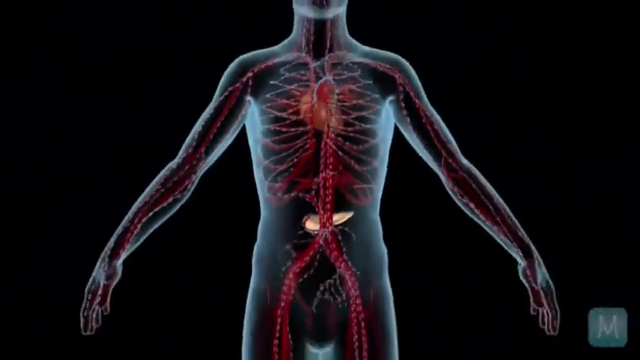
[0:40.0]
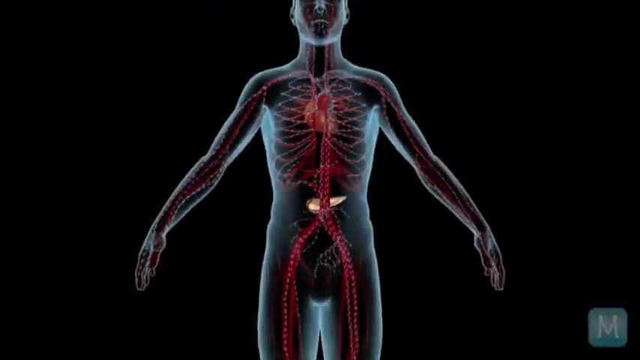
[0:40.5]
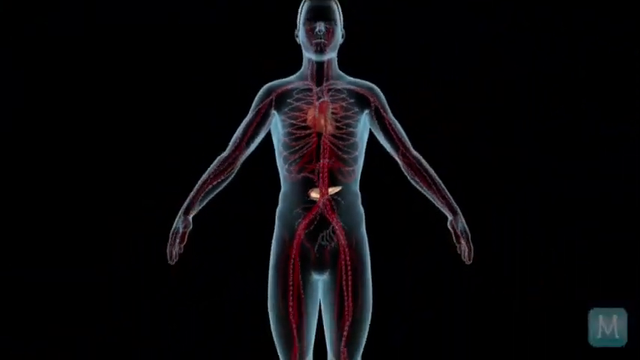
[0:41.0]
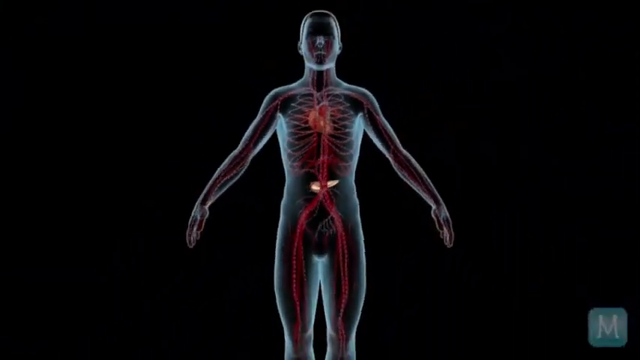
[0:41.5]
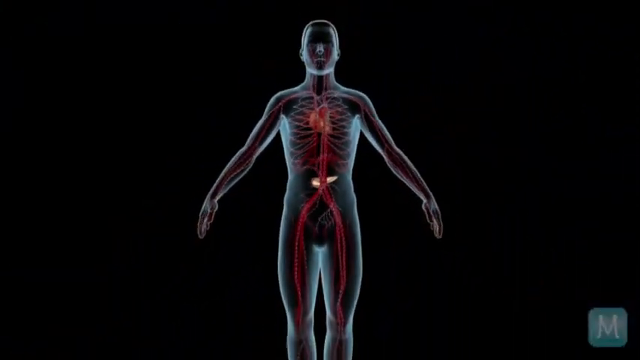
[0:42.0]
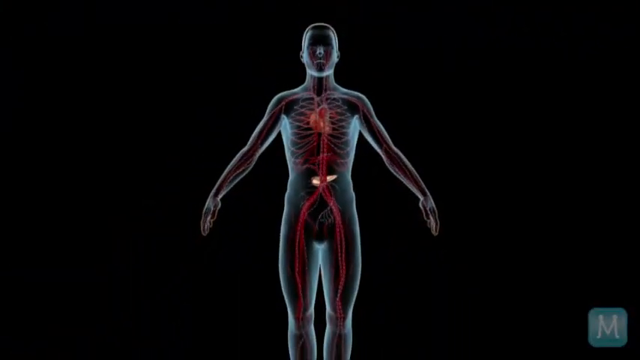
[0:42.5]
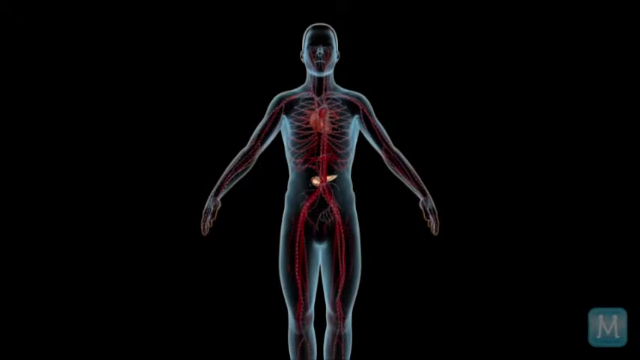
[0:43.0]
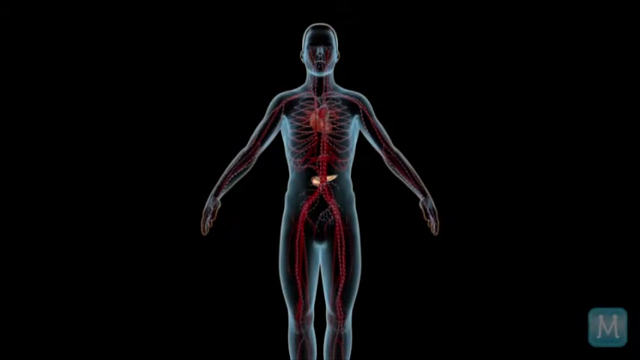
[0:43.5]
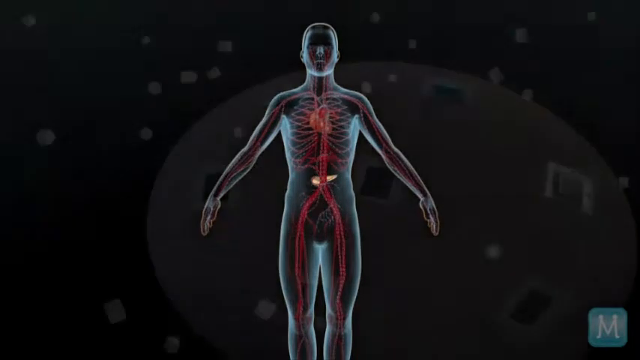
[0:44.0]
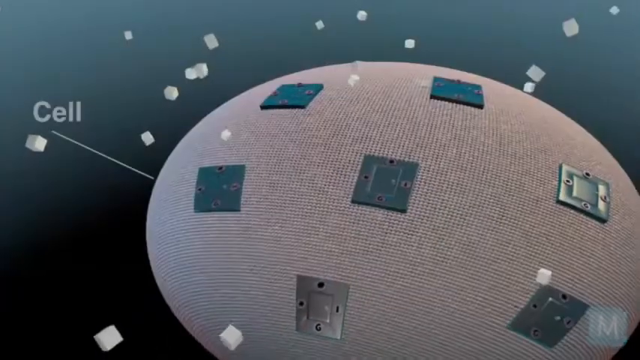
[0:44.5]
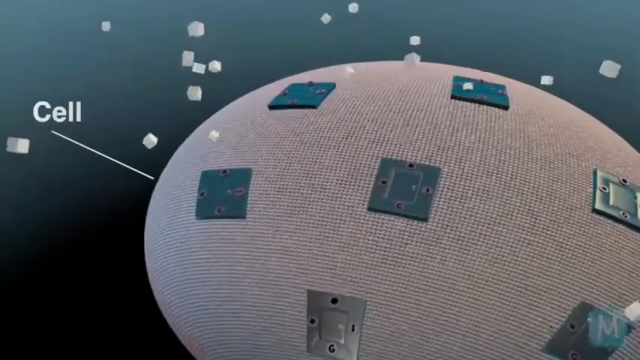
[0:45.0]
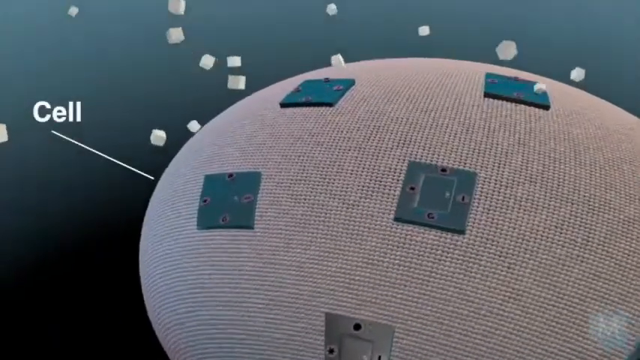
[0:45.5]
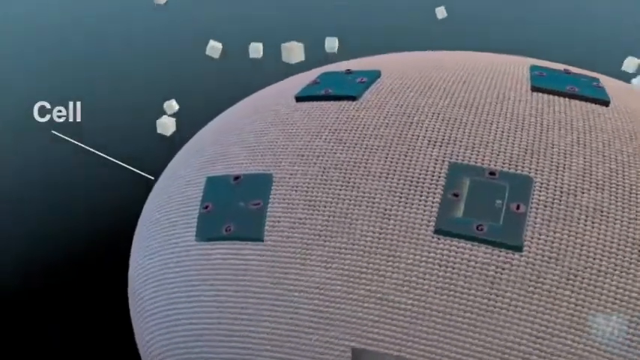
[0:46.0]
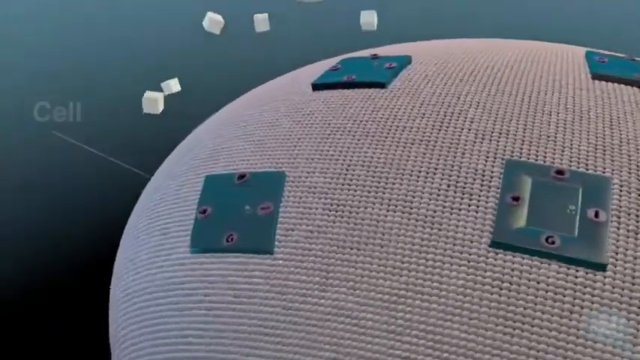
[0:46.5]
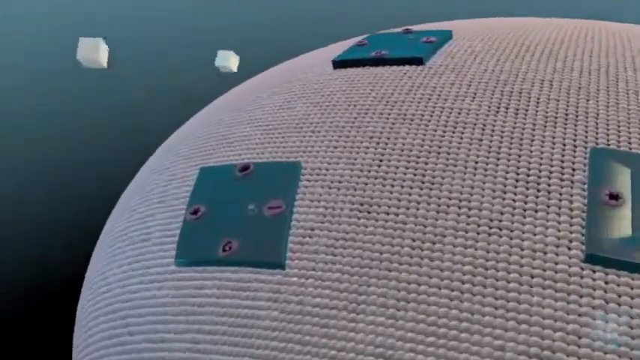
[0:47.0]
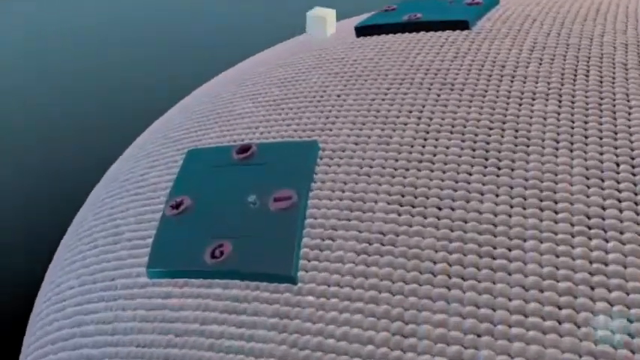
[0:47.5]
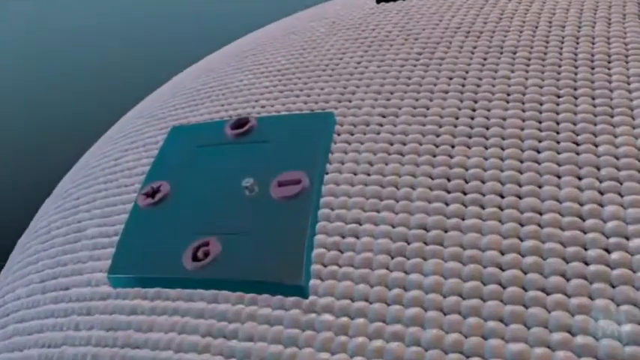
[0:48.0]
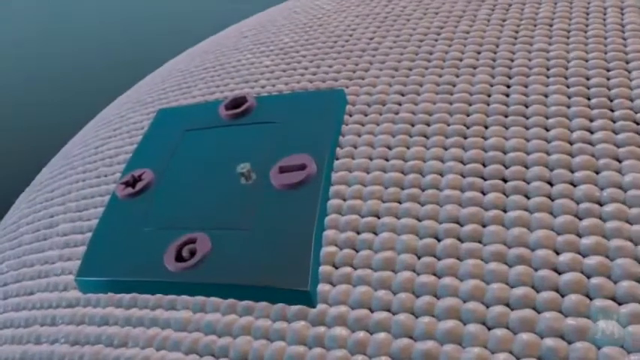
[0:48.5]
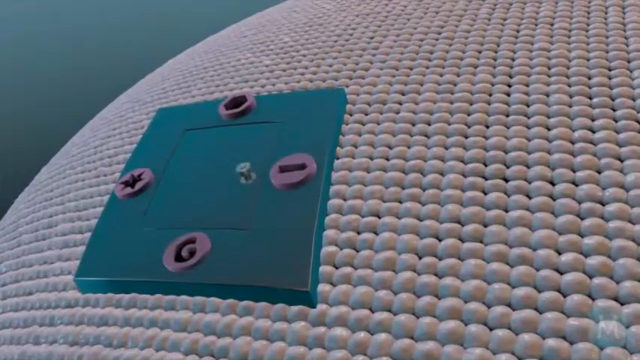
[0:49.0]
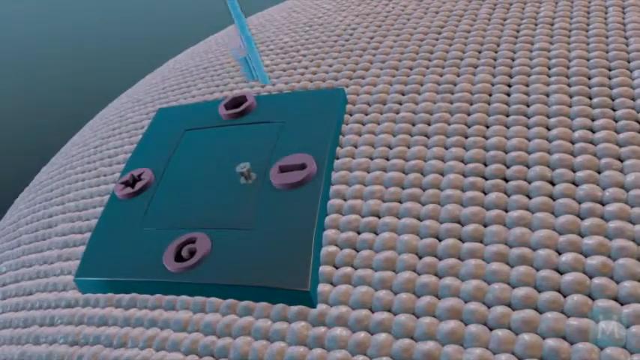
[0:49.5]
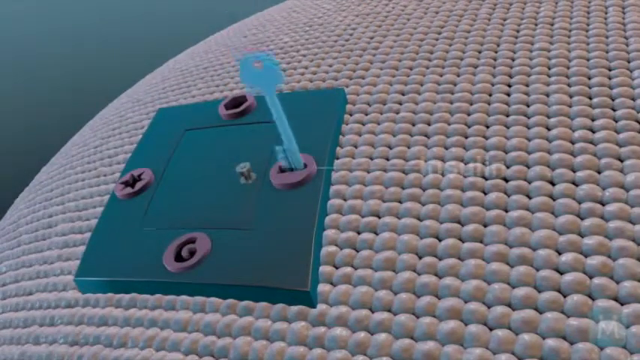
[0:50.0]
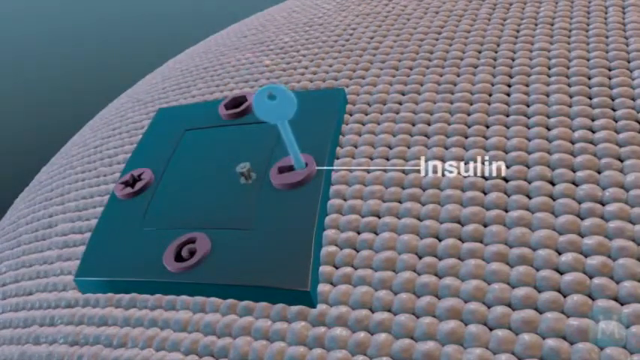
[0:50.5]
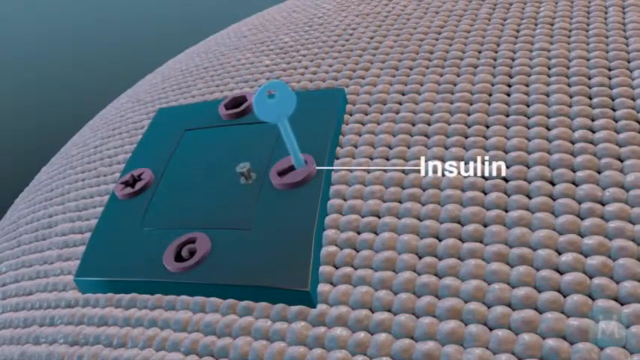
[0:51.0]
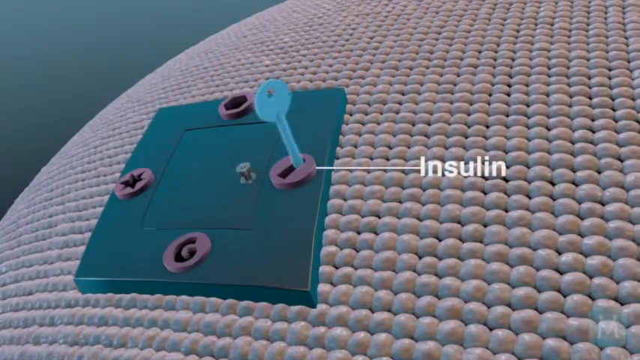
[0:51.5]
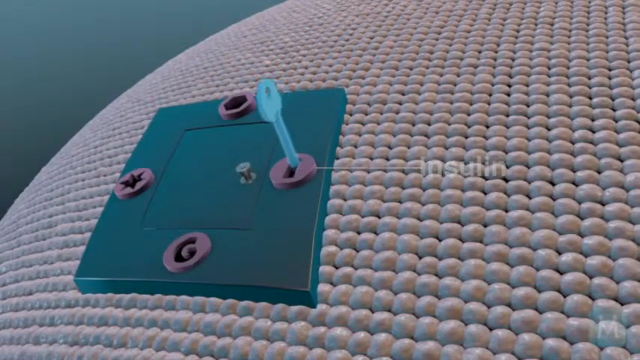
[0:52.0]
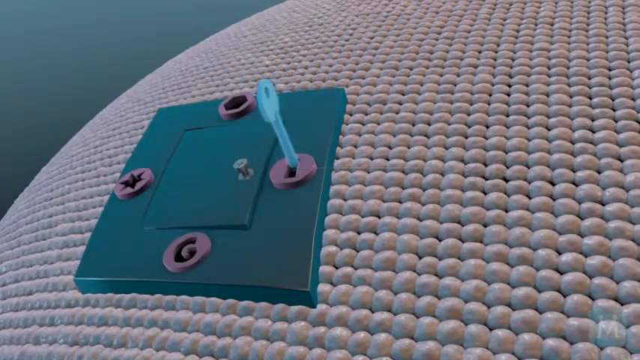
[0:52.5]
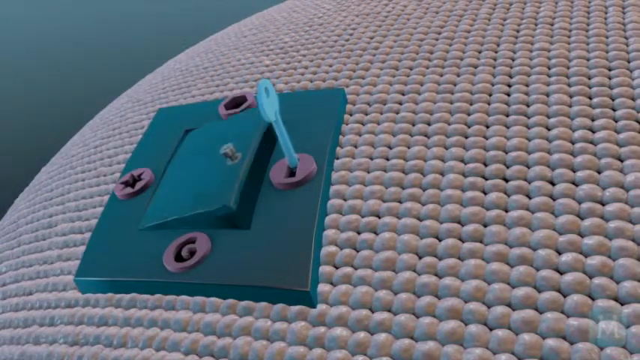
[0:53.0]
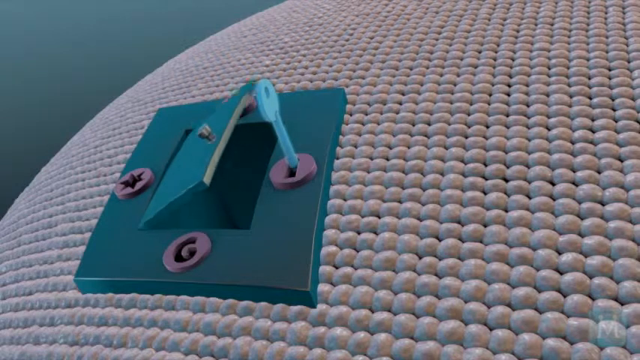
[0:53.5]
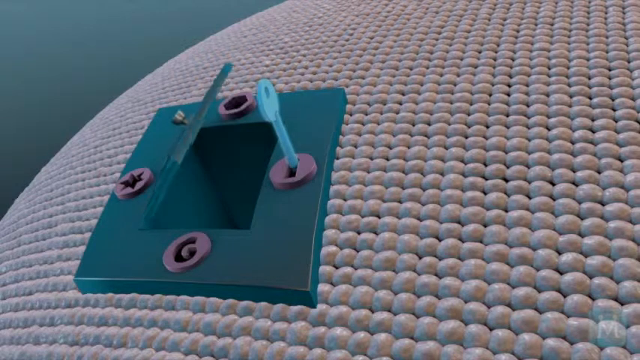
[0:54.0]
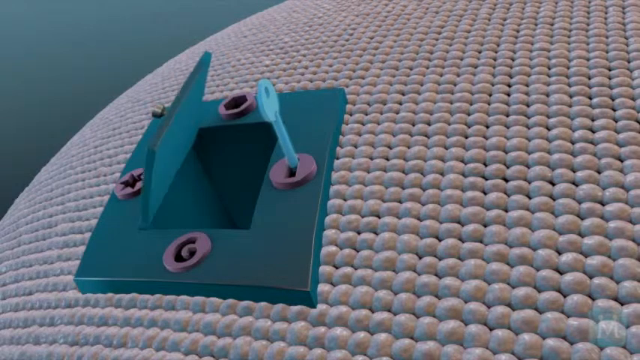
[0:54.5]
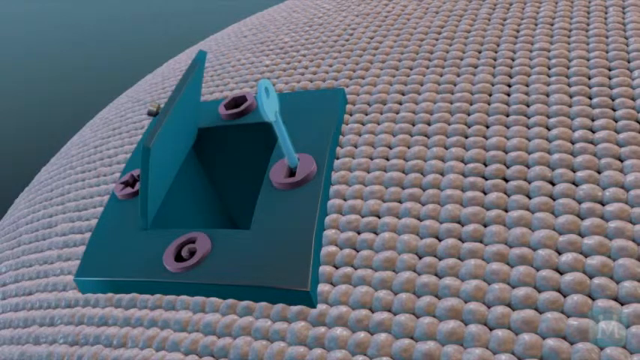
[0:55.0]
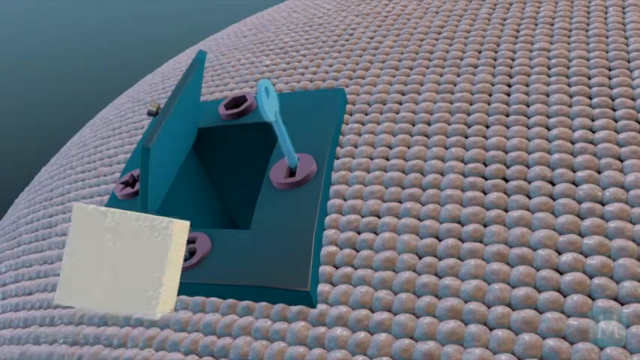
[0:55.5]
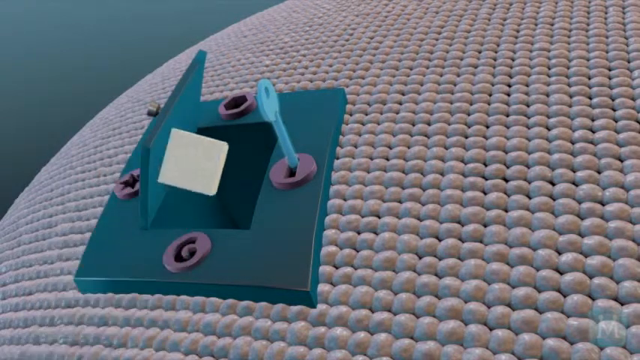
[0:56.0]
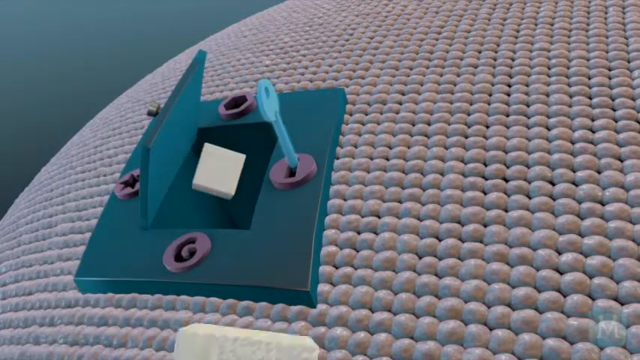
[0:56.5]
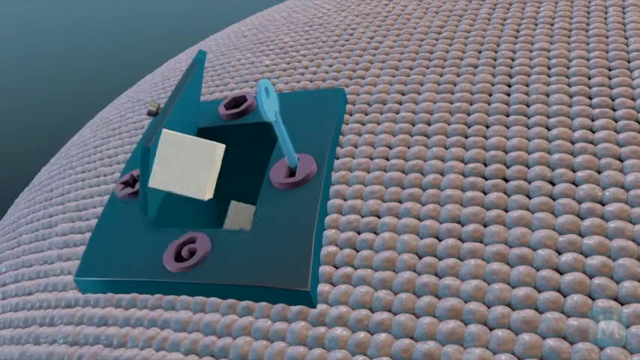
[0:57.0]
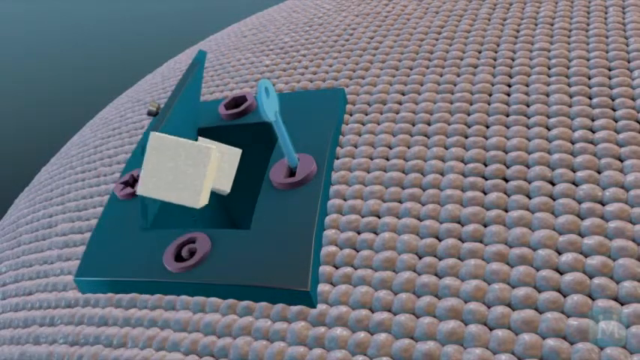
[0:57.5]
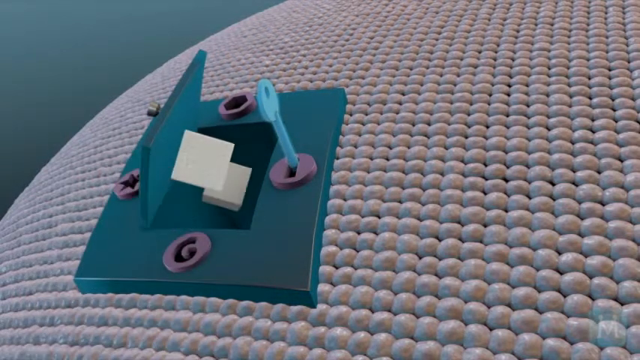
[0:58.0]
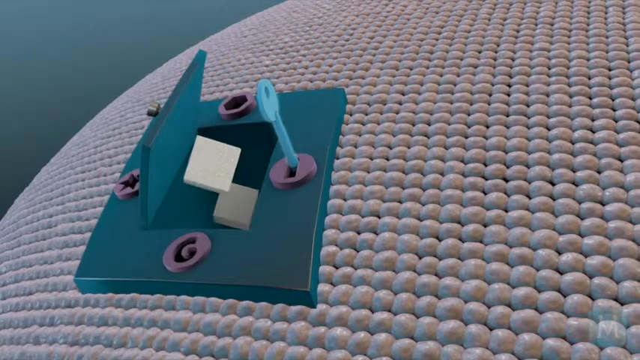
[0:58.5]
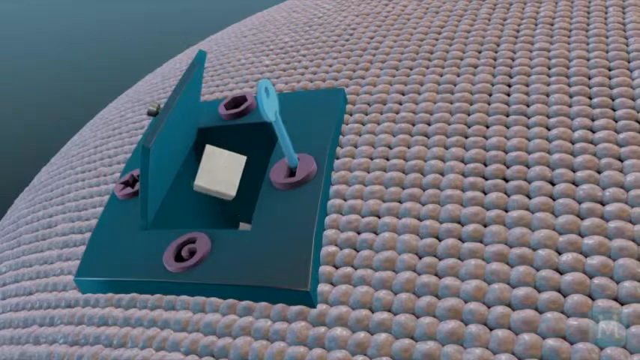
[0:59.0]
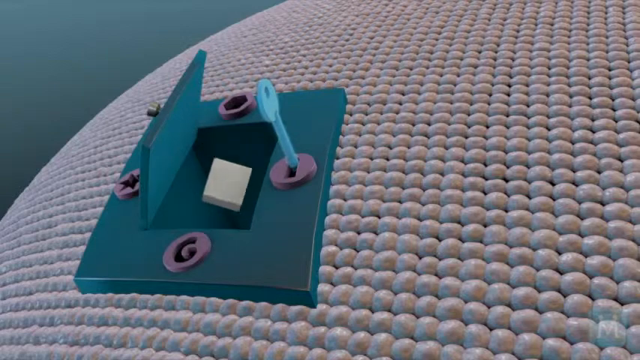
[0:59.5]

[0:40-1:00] A computer-generated version of a human shows different parts of the bloodstream moving throughout the body, with blue marks indicating the directions the blood moves. As it zooms out of the x-ray-like computer-generated person, a heart and the pancreas are visible. It then zooms into a cell, shows the cell and labels it, and zooms further into the cell, where different things happen. A key goes into what looks like a lock, with the word insulin next to the key. The key kind of rotates, opening a fictional door, and insulin, looking like small white cubes, goes into the cell. The setting is primarily the inside of the human body.